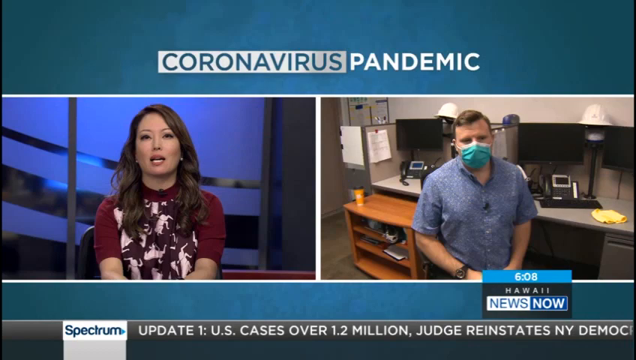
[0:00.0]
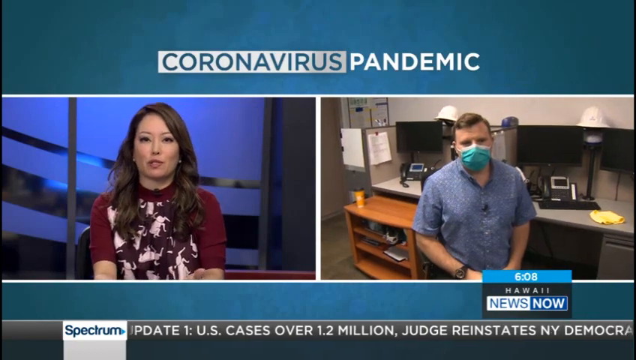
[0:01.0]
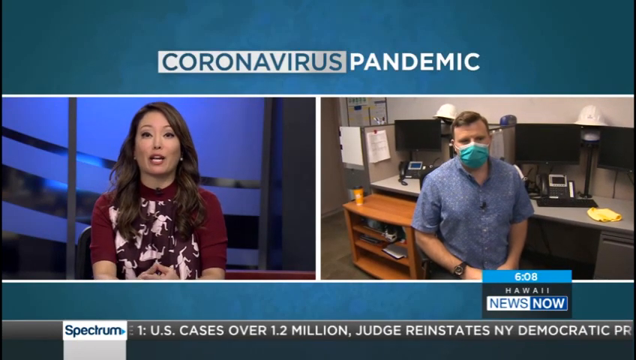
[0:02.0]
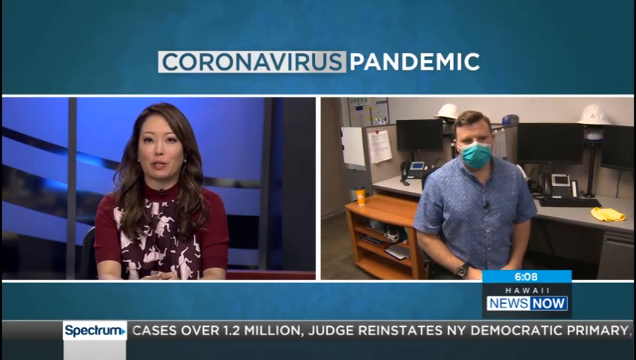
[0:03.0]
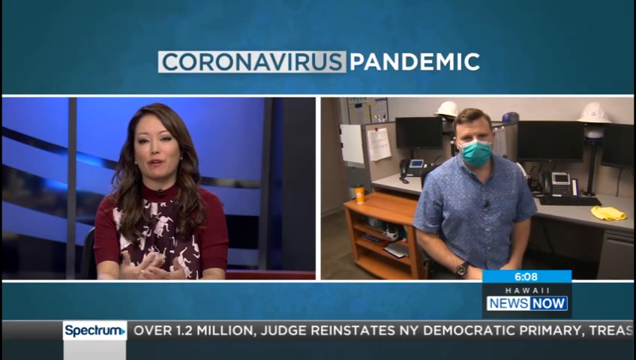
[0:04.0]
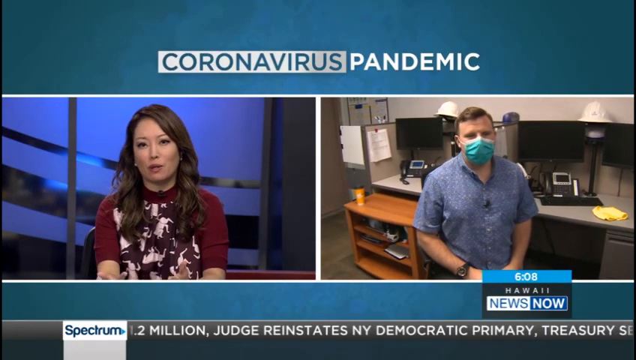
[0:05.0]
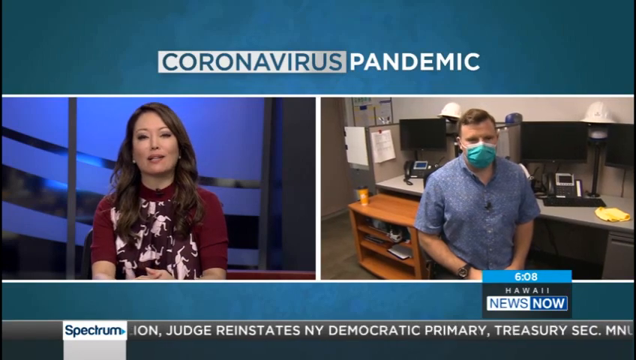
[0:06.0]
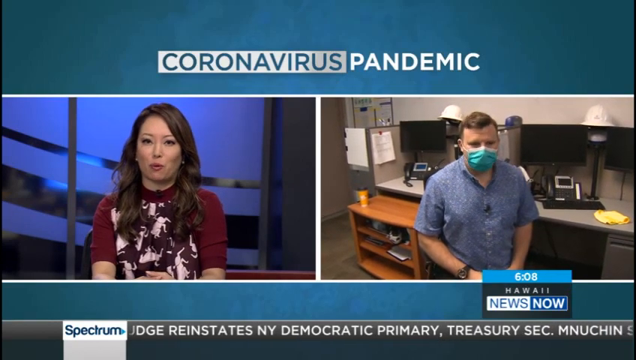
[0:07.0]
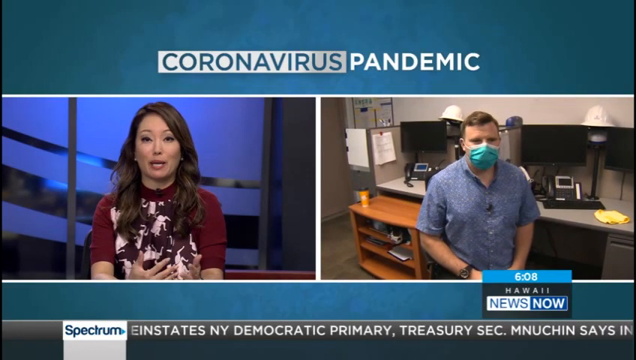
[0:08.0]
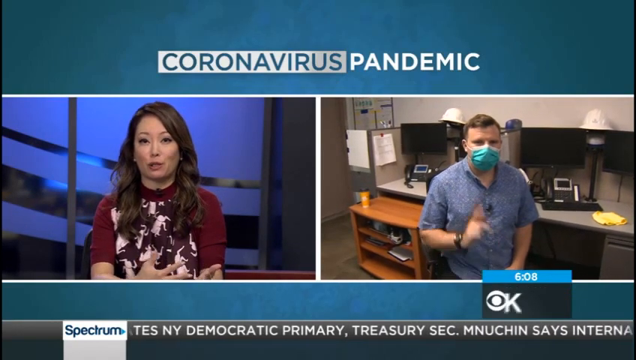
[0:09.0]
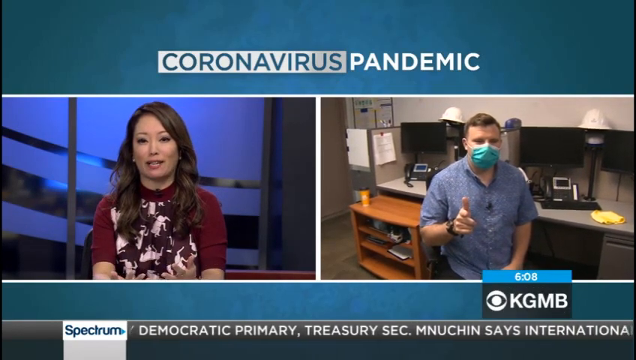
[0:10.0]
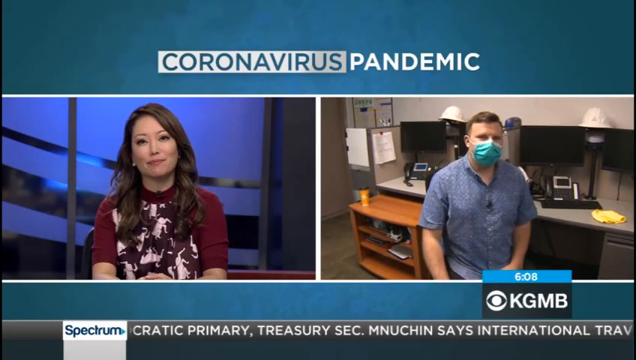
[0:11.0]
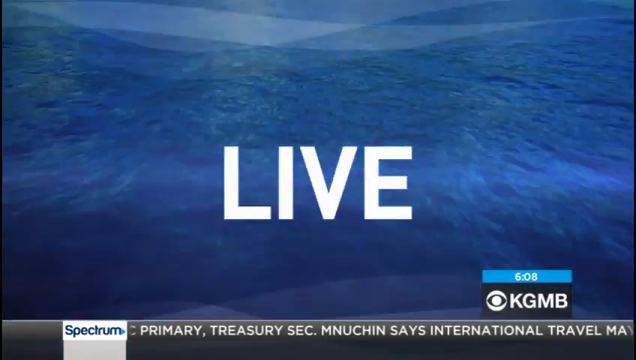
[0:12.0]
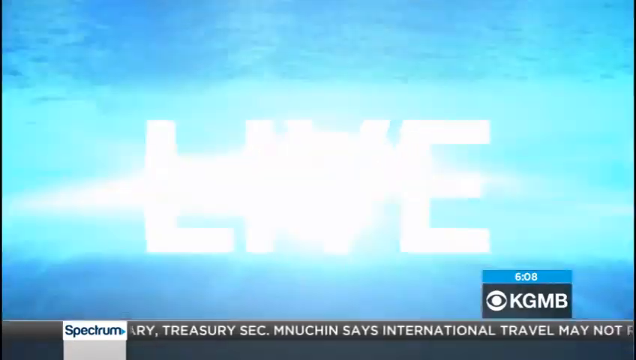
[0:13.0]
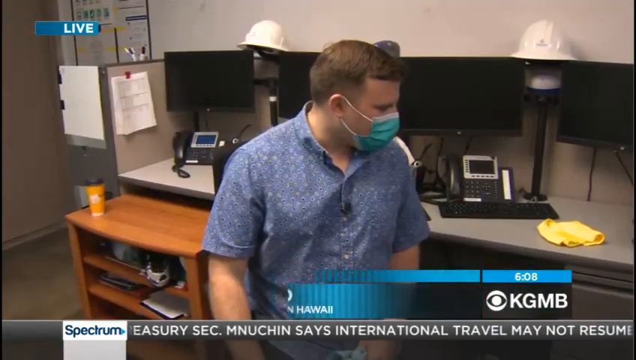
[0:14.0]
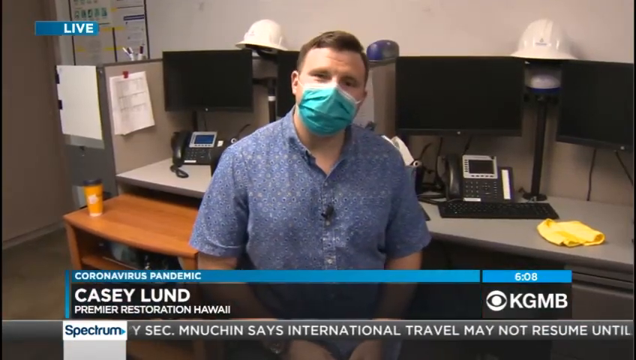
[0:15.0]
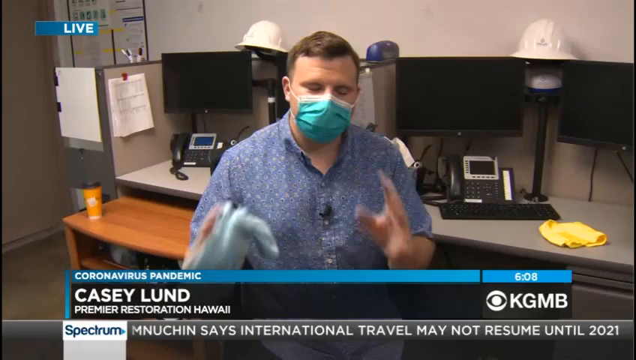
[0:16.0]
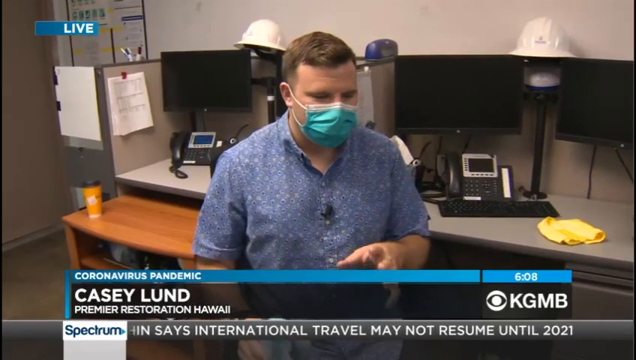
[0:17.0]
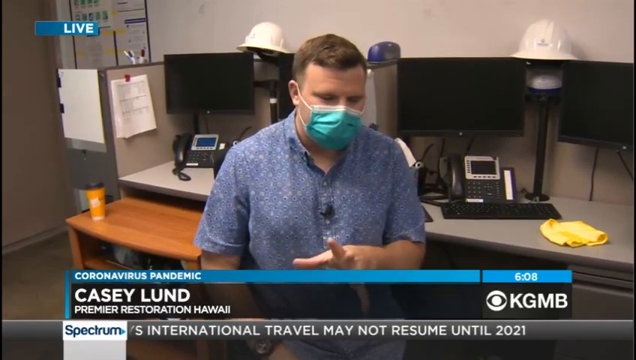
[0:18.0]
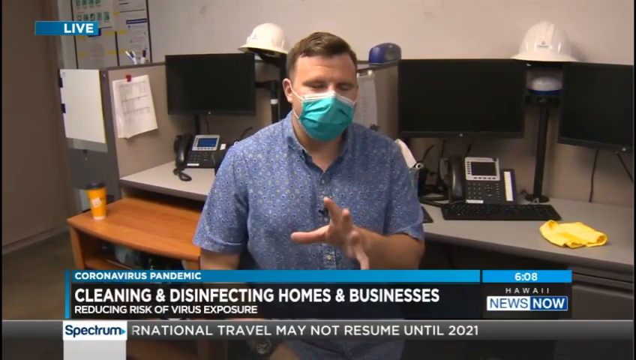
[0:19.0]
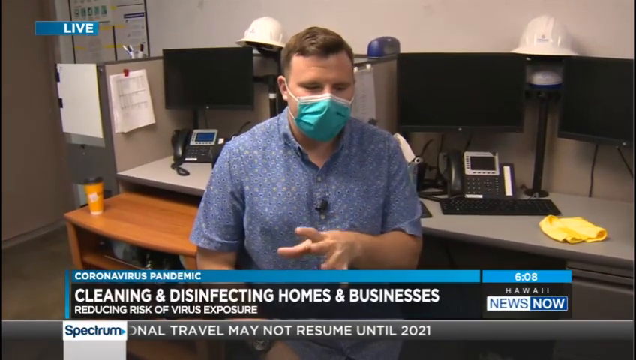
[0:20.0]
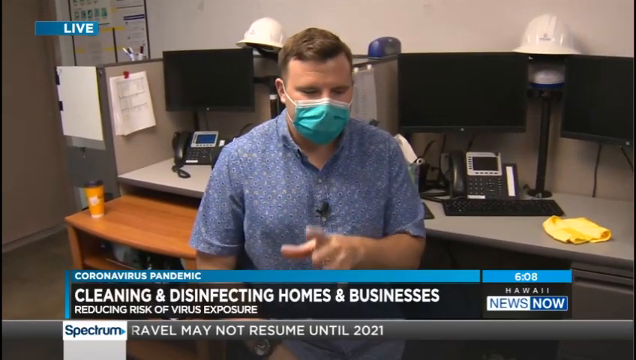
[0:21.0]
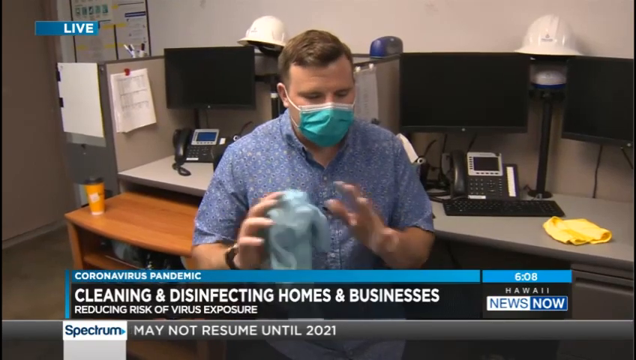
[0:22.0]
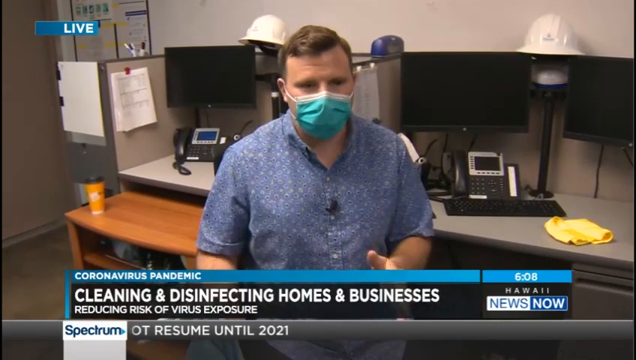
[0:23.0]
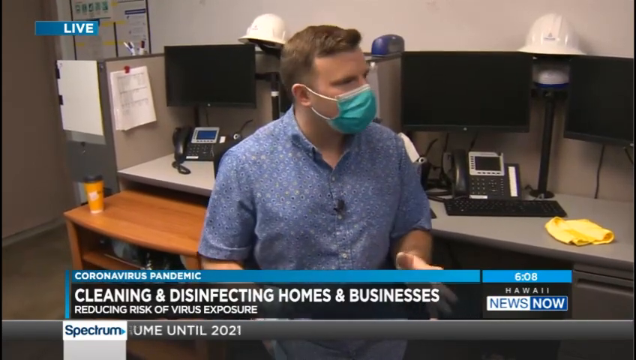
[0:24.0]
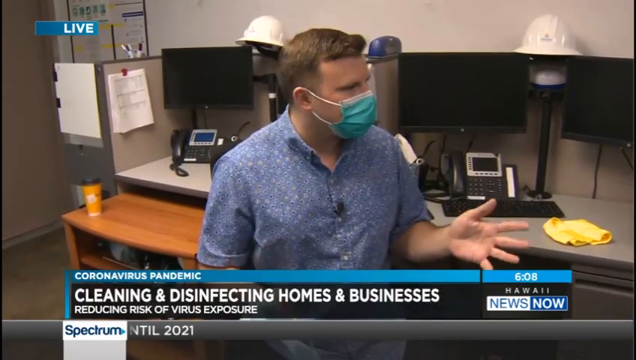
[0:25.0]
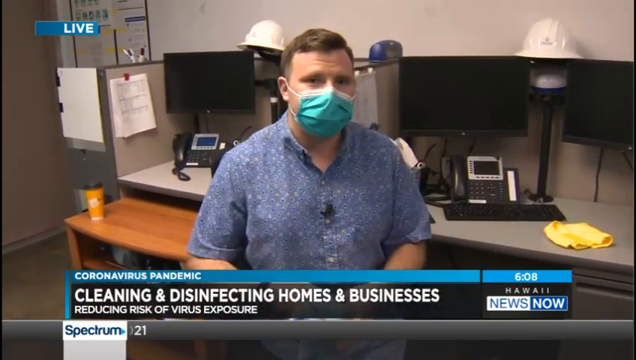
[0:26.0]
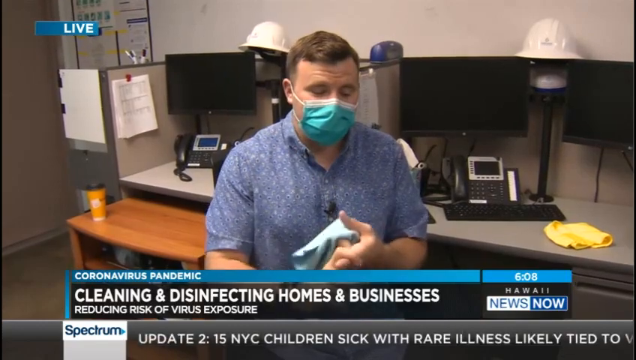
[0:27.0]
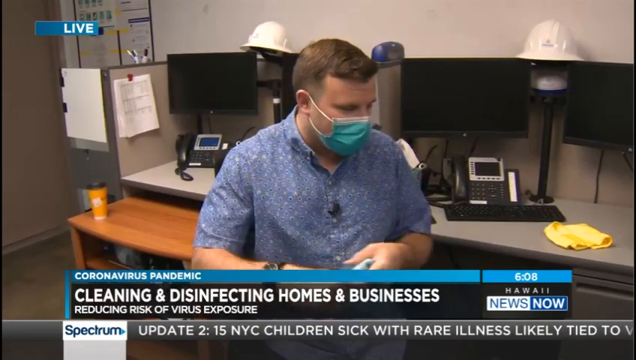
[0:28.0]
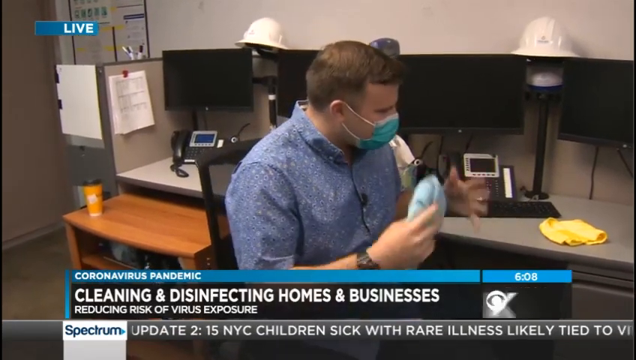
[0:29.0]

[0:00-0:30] The video opens on a split screen. On the left, a woman appears to be in a news broadcasting setting; on the right, a man is in an indoor setting, with several computer monitors, phones and a very big desk behind him. The woman on the left talks and makes several hand gestures. The man on the right then points toward the camera, and the shot changes to show the man full screen. In the lower left corner, text reads "coronavirus pandemic", "KC London" and "Premier Restoration Hawaii". News updates run across the screen throughout, reading "Update one, US cases over 1.2 million", "Judge reinstates Democratic primary" and "Treasury Secretary Mnuchin says international travel may not resume until 2021".